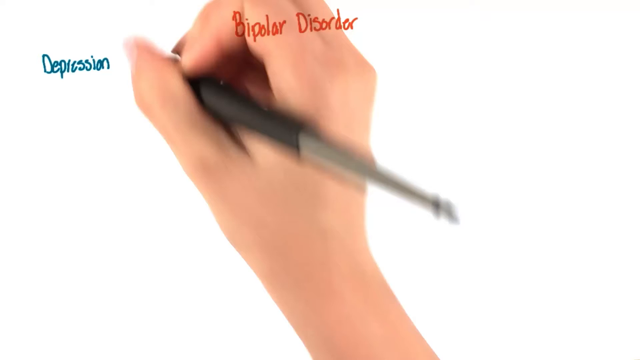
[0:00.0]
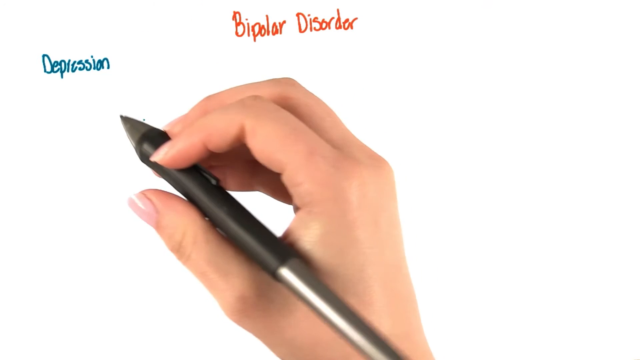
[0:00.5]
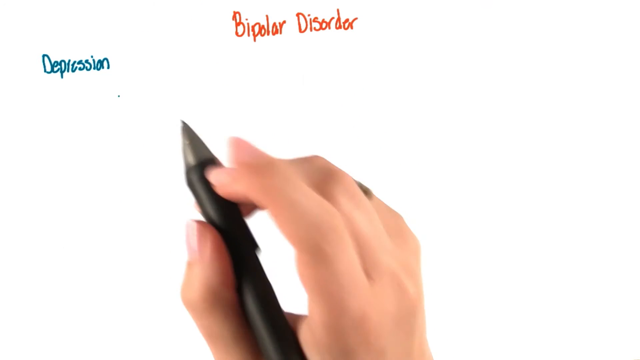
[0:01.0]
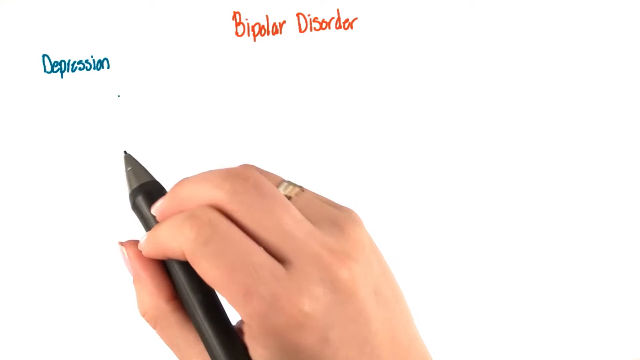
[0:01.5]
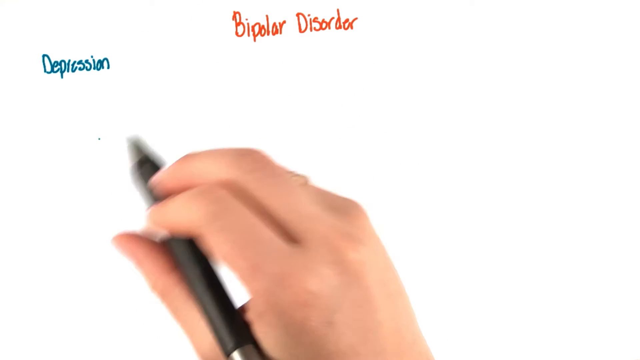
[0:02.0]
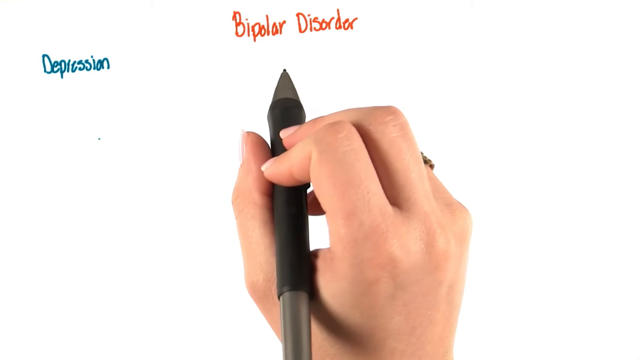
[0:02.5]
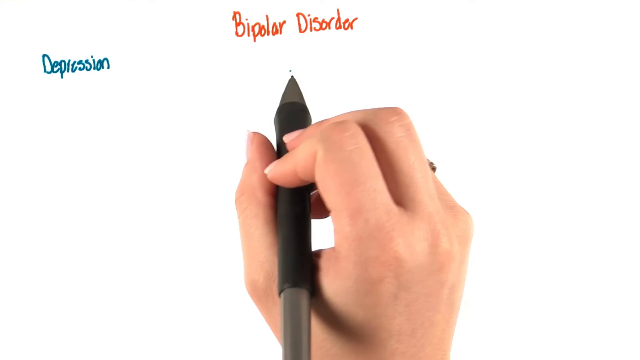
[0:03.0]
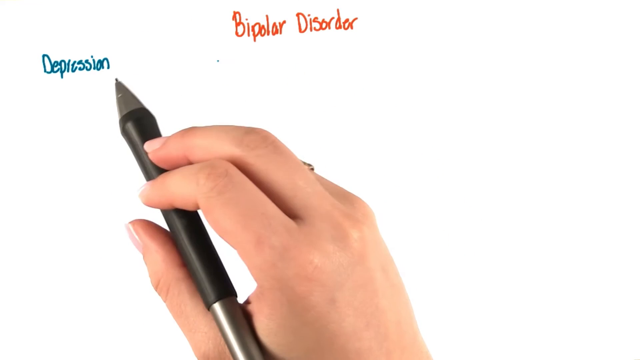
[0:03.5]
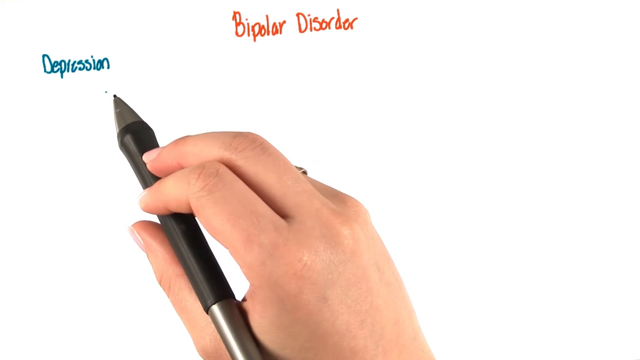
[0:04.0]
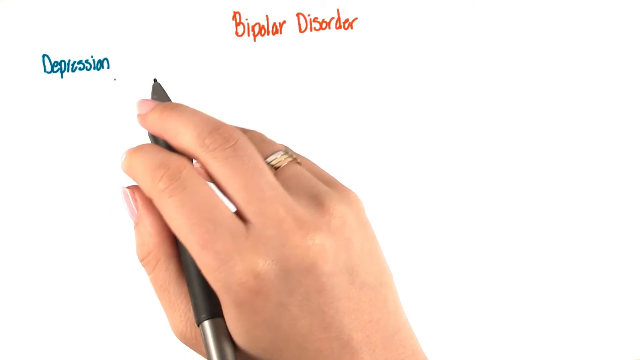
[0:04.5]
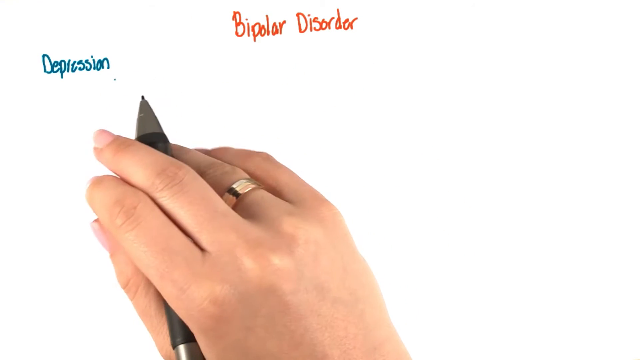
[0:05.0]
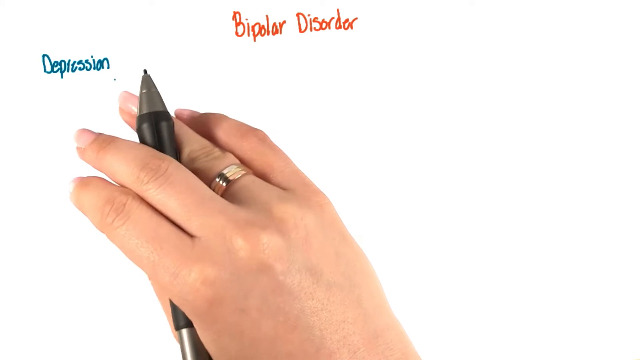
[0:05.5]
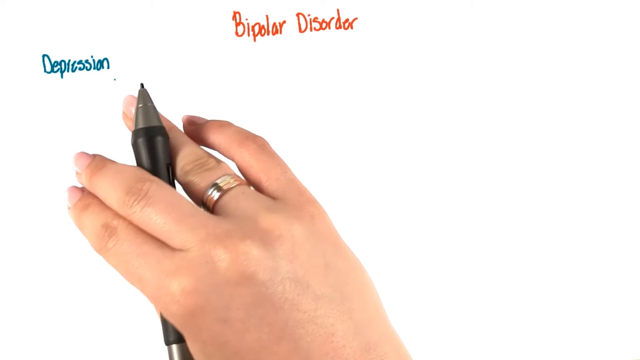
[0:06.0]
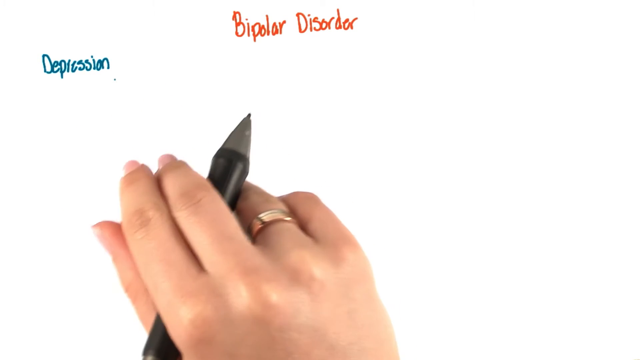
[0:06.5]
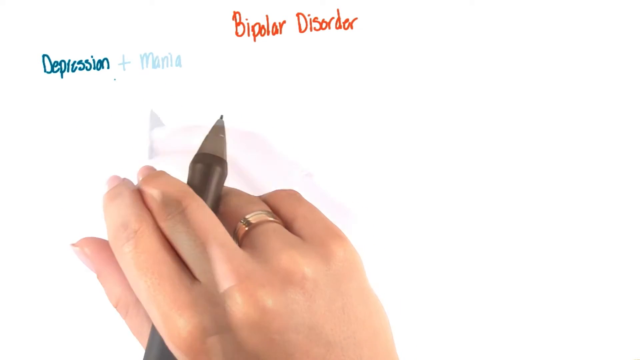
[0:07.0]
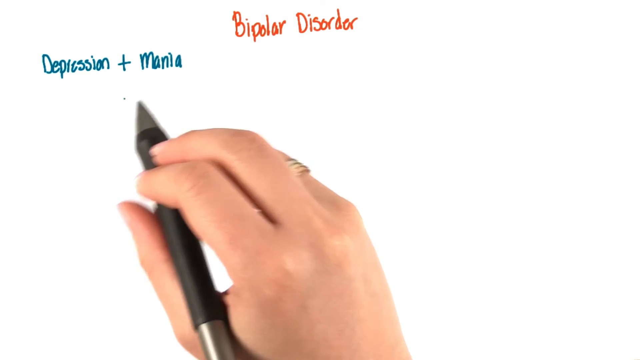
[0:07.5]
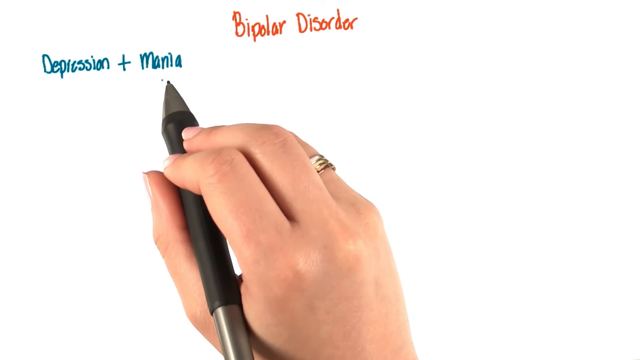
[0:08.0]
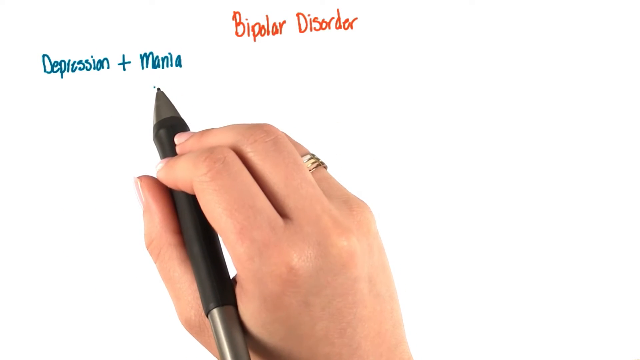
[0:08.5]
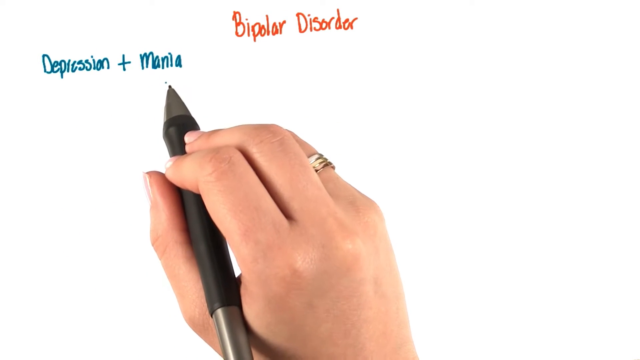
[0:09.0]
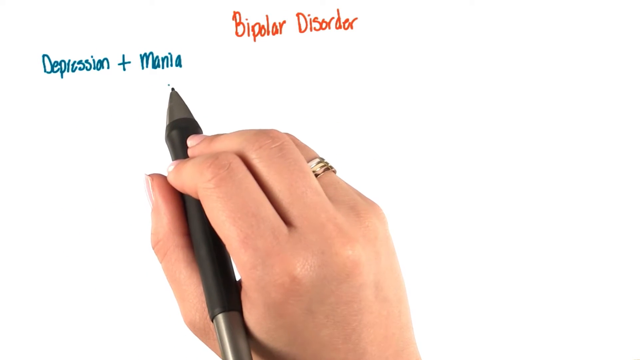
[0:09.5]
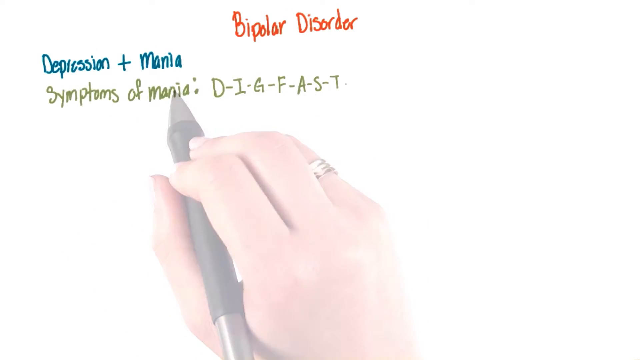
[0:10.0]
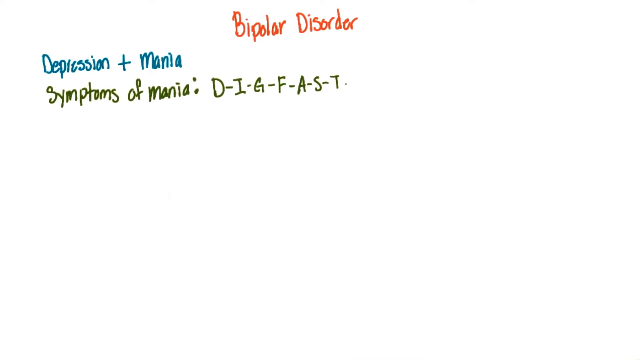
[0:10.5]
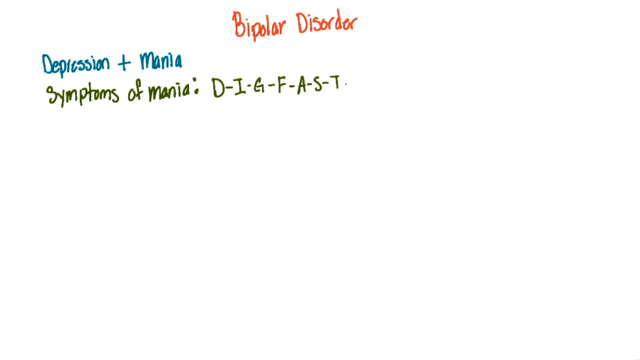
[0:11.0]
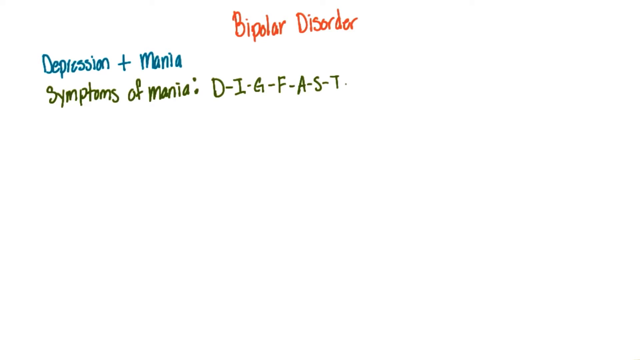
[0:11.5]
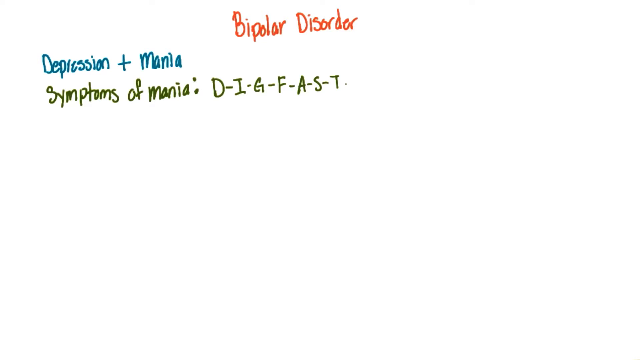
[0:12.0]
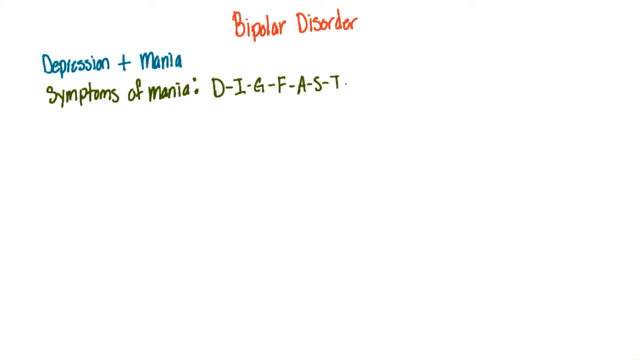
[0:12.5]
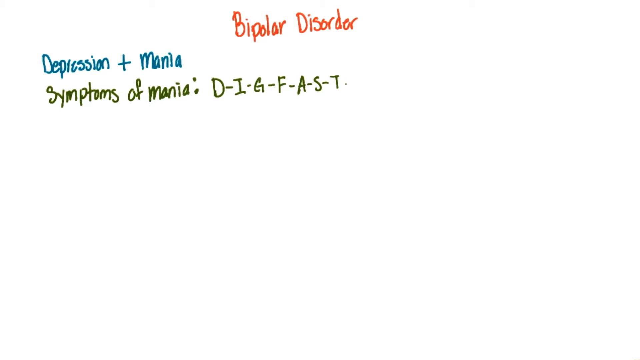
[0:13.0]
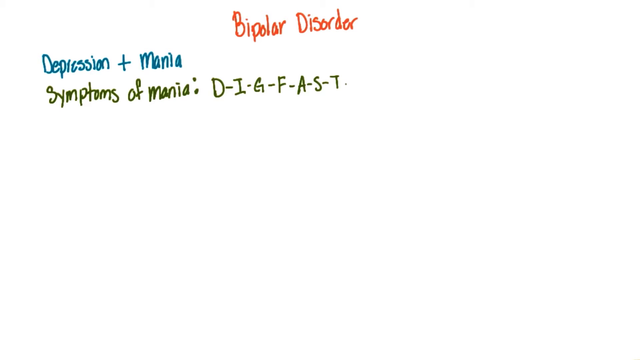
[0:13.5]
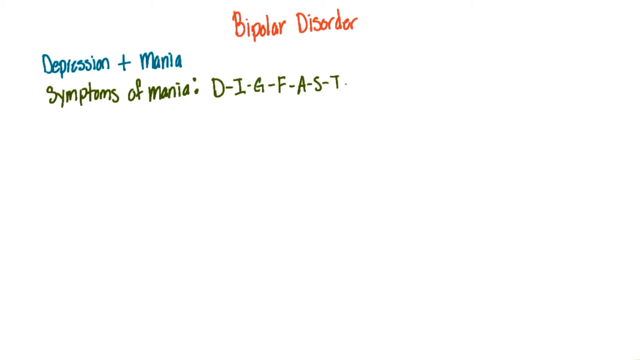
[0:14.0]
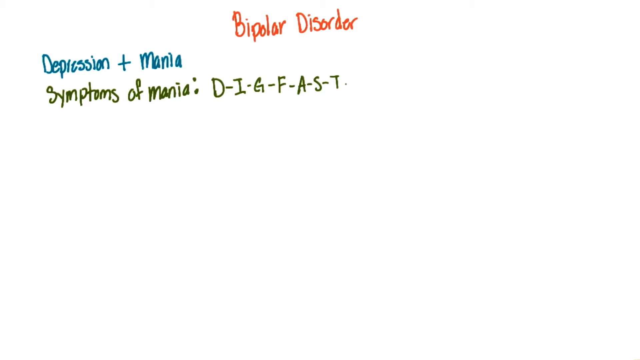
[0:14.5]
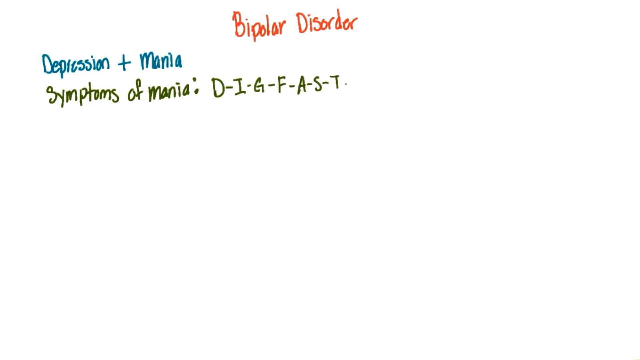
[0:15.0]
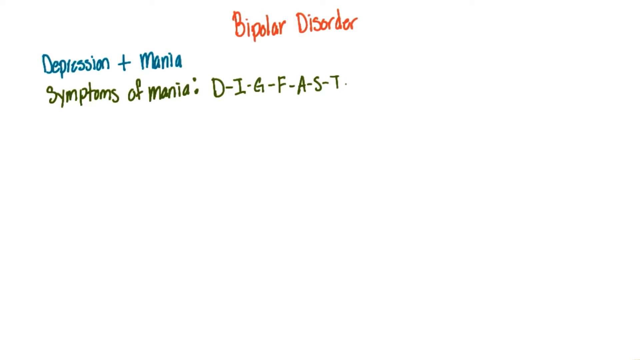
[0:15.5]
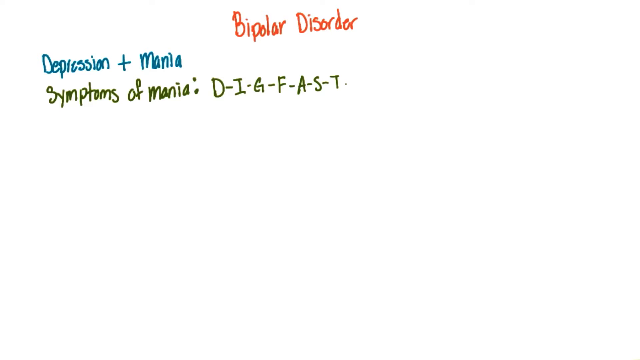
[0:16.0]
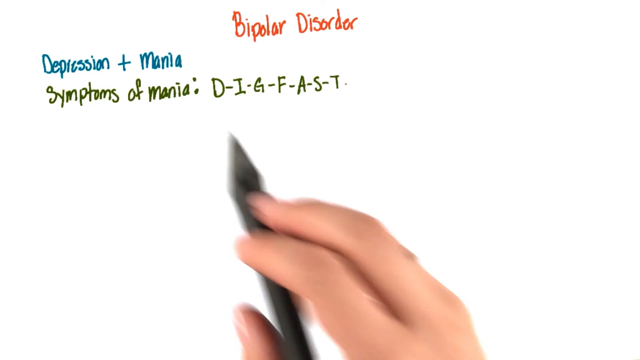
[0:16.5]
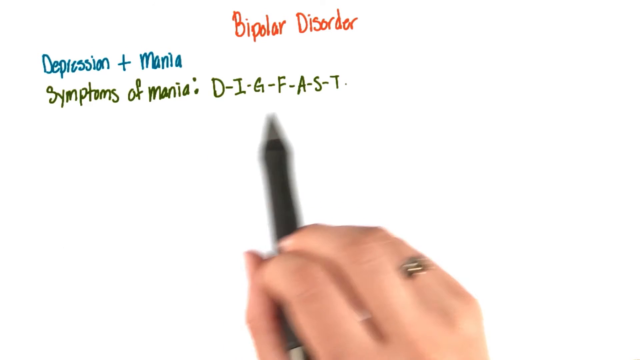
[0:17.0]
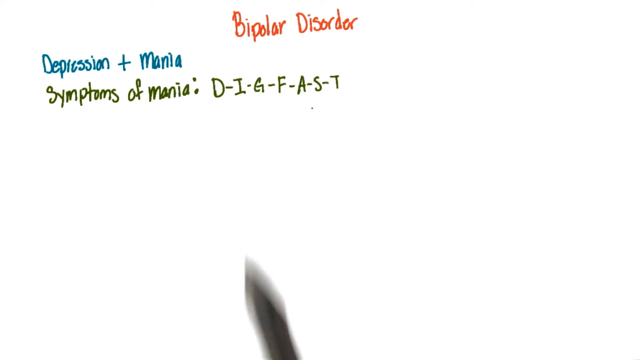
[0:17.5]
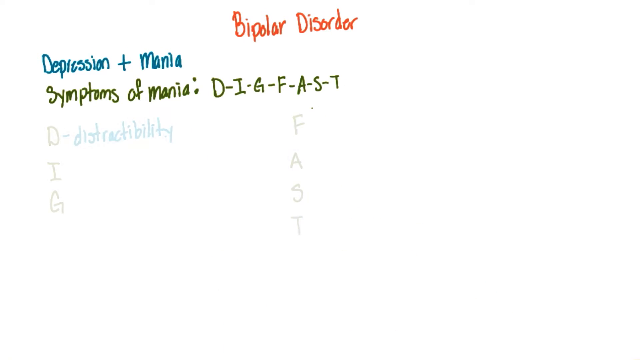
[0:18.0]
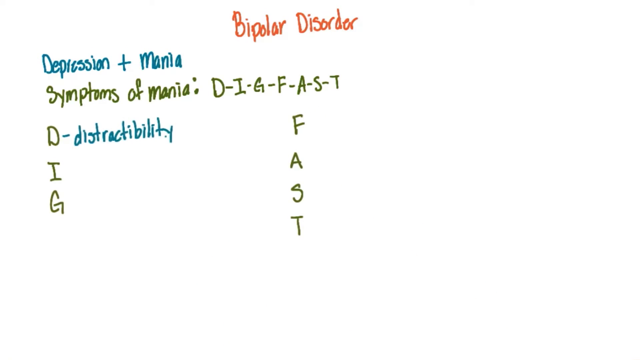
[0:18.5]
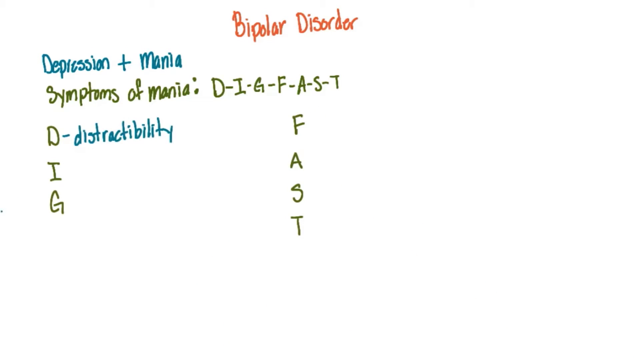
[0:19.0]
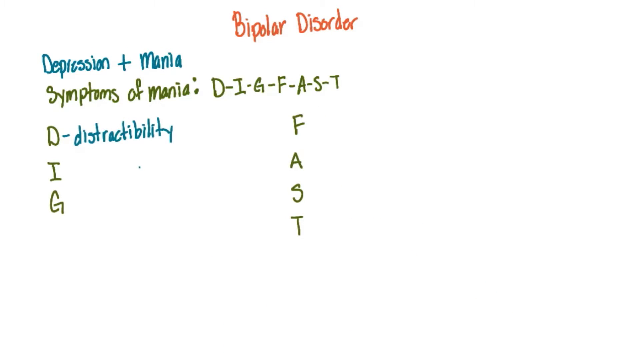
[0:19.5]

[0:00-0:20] A human right hand holding a black and gray pen comes in from the bottom center of the frame, made to look like it is writing on a solid white background. Text is already on the screen: "depression" in the top left and "bipolar disorder" in the top center. The hand gripping the pen pulls back a little and points with the index finger at "bipolar disorder" while still gripping the pen with the middle finger and thumb. The pen moves under "bipolar disorder" and then under "depression". The hand points at "depression" with the middle and index fingers while holding the pen between the middle and ring fingers, then adds "plus mania" next to "depression" and taps the pen under the word "mania" three times. New text appears as the hand and pen disappear; it reads "symptoms of mania D-I-G-F-A-S-T". The pen comes from the bottom of the screen again and slowly moves under the letters spelling DIGFAST. New words appear, reading "distractibility" for D, and the rest of the letters of DIGFAST are spelled out in columns.